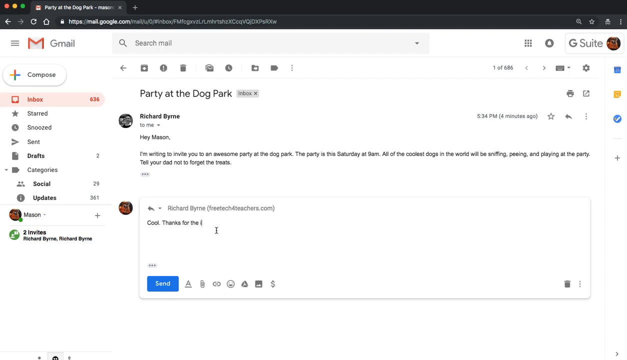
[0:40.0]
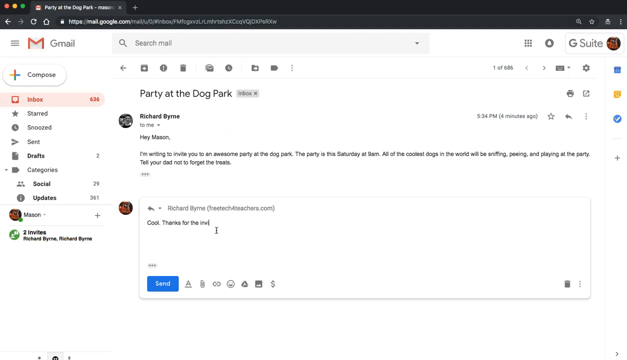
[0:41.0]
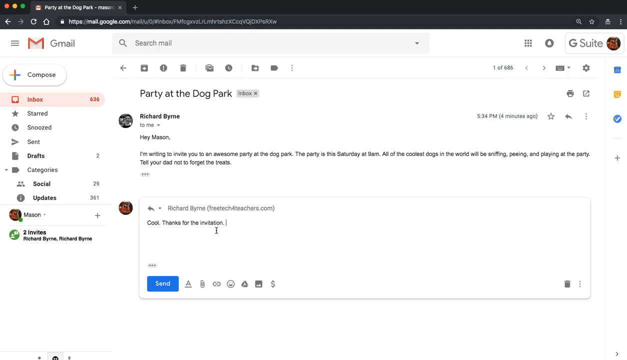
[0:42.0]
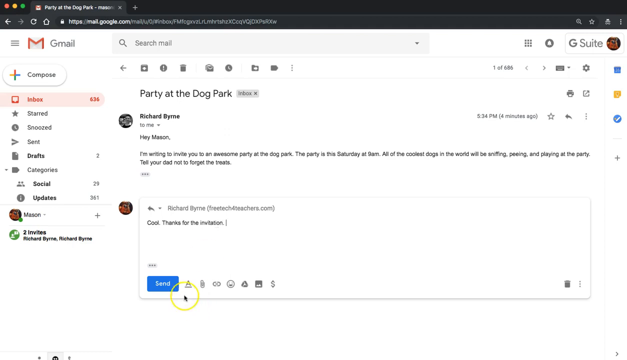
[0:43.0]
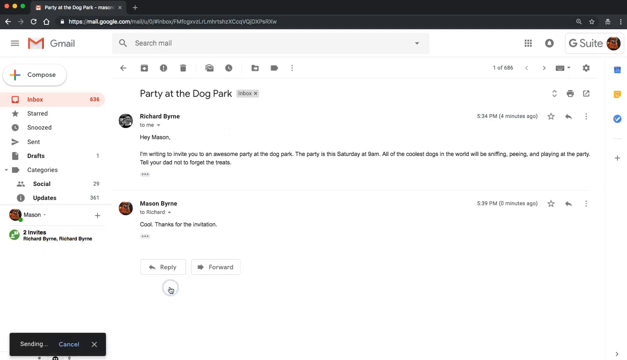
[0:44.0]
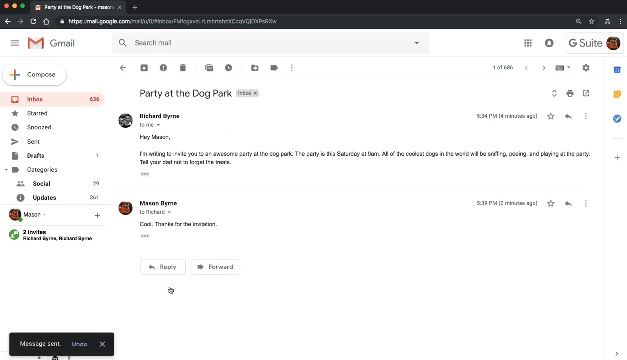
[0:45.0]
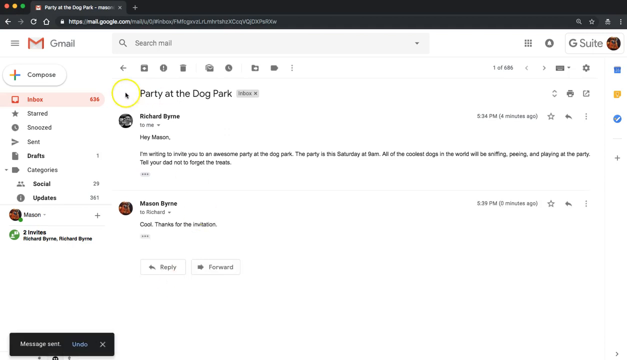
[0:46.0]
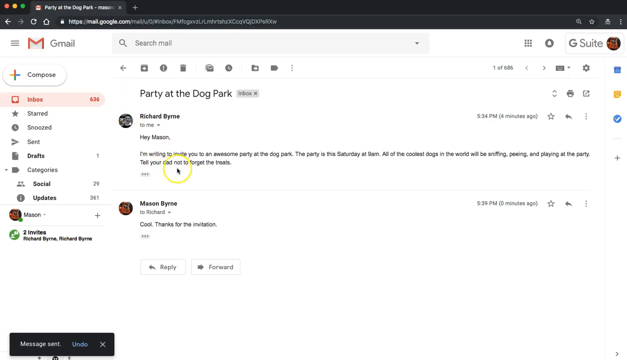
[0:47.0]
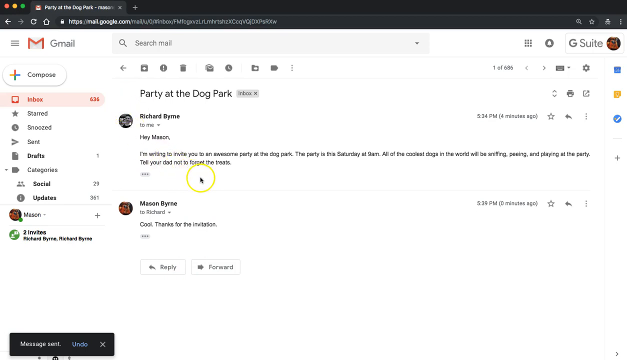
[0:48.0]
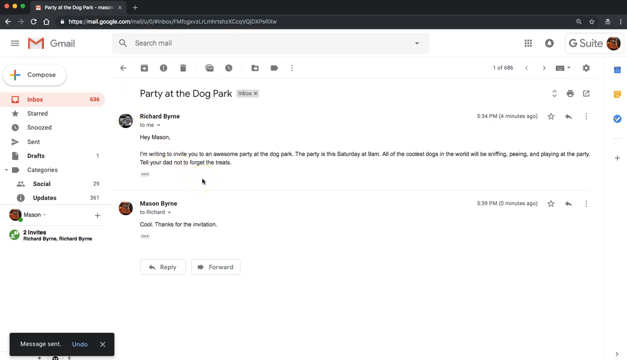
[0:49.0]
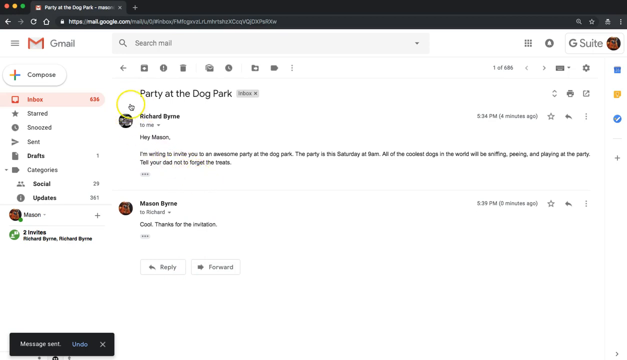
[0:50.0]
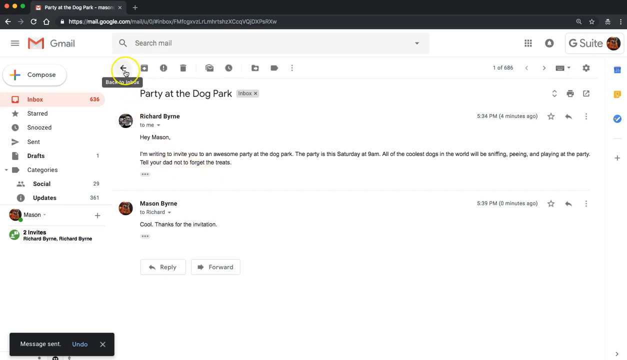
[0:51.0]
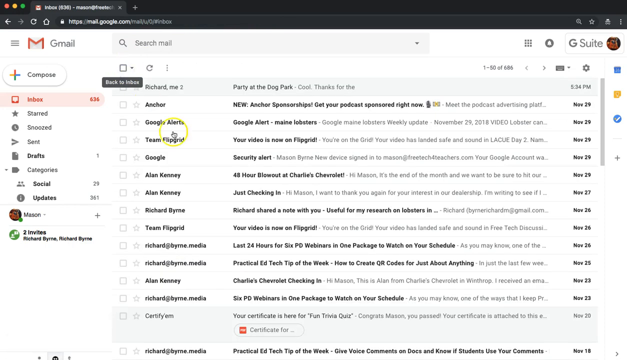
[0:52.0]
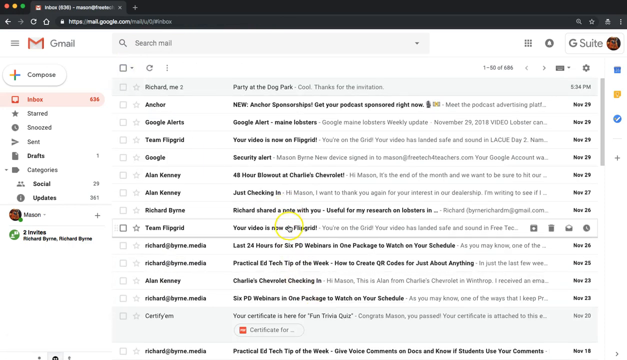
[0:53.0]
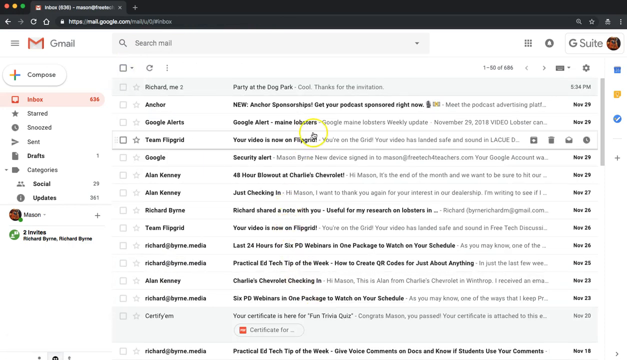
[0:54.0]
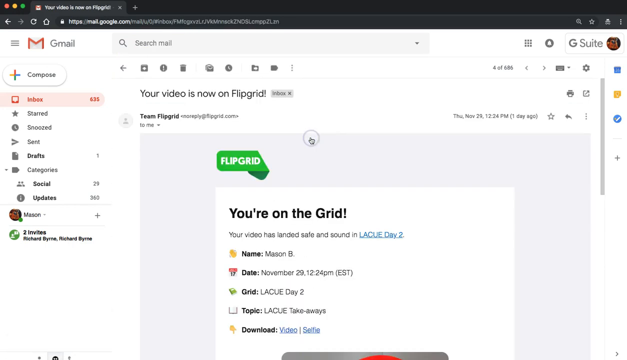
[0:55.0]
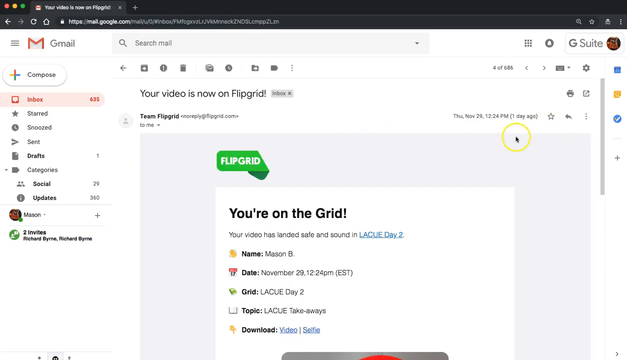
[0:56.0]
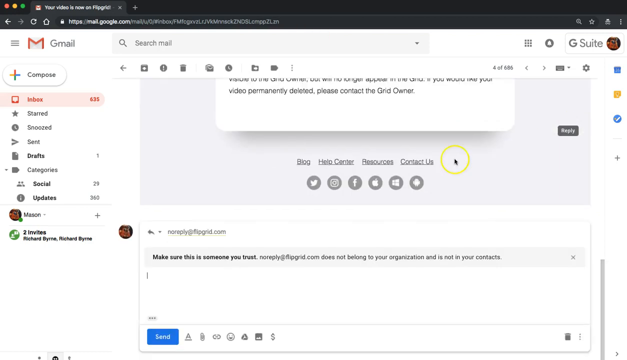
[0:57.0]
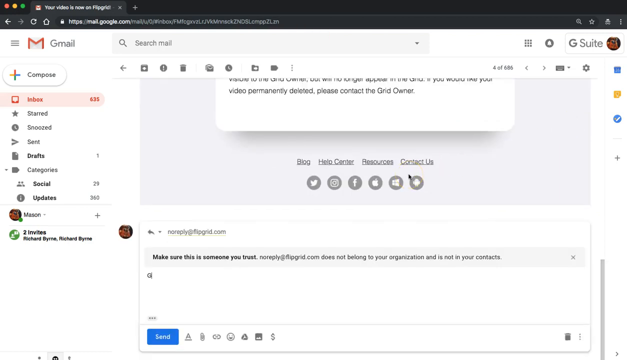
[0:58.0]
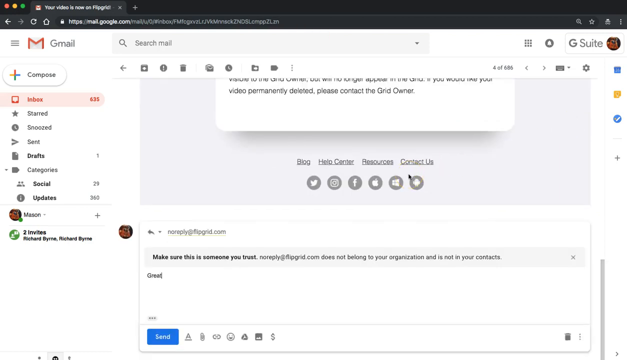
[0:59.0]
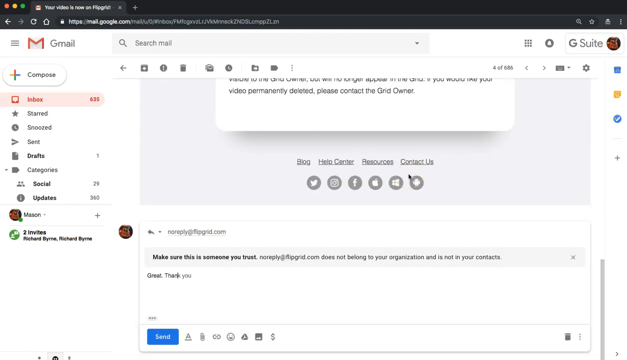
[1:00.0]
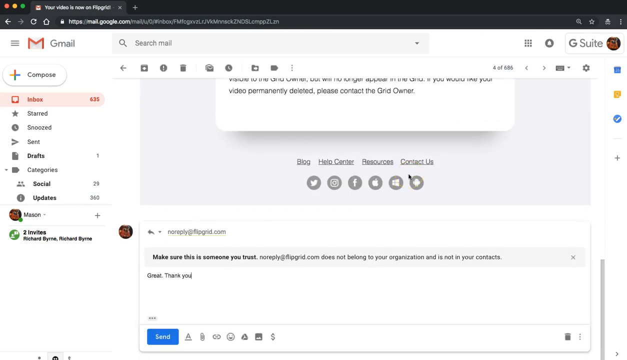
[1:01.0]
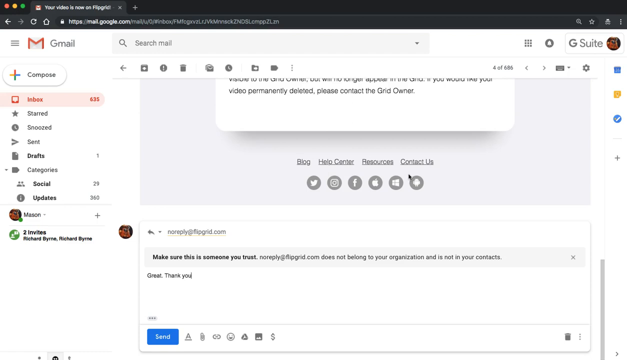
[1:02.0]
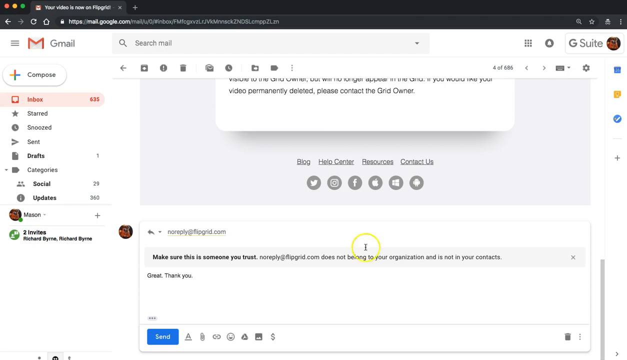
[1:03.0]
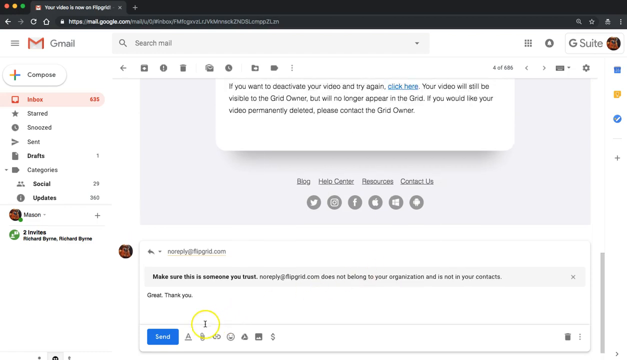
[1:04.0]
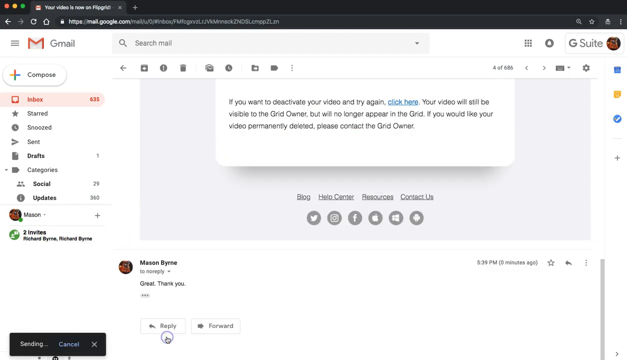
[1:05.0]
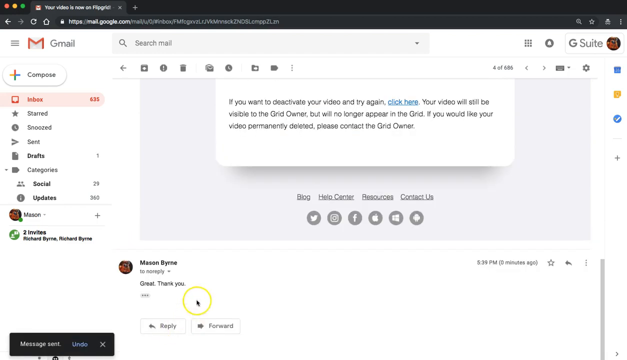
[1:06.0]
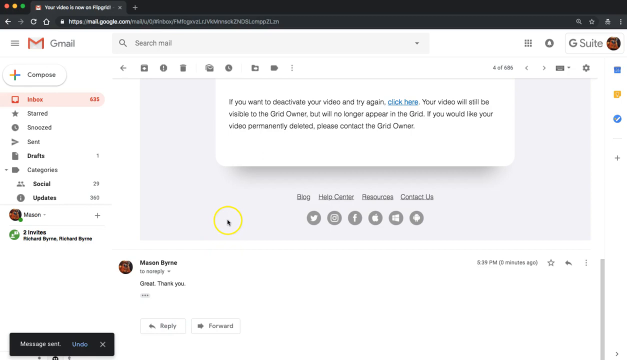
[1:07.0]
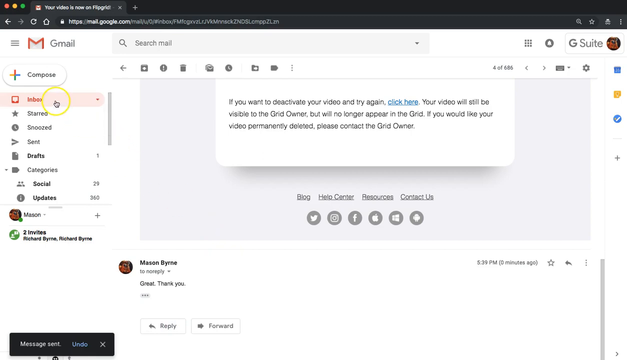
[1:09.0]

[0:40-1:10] In the screen capture of someone's email account, a person is looking at an email and responding to it. The email's title says "Party at Dog Park", and it is from Richard Brine: "Hey Mason, I'm writing to invite you to an awesome party at the dog park. The party is this Saturday at 9am. All of the coolest dogs in the world will be sniffing, peering, and playing at the park. Tell your dad not to forget the treats." The person replies "cool. Thanks for the invitation." and hits the send button. He reads over the email that was sent to him, scrolls back to his inbox, clicks on the fourth email, and starts typing a response that says "great, thank you". He scrolls up, hits send, scrolls back up the page, and clicks on his inbox, the folder he goes to.